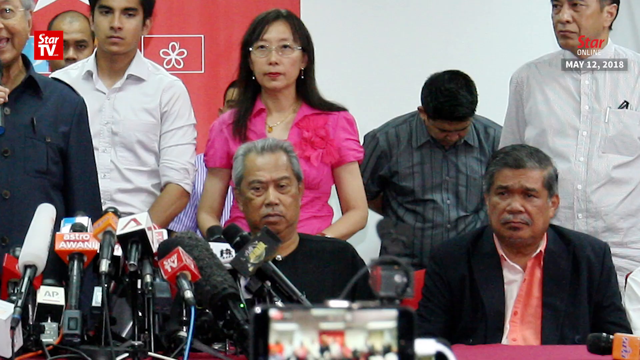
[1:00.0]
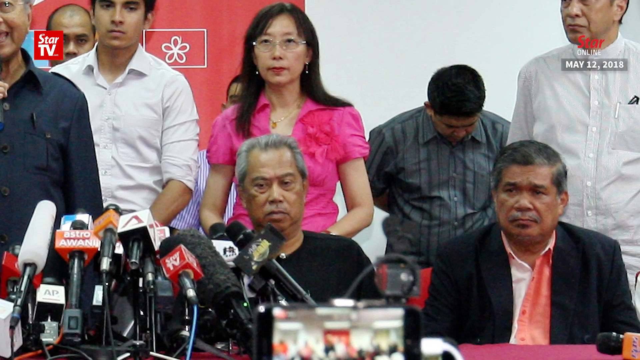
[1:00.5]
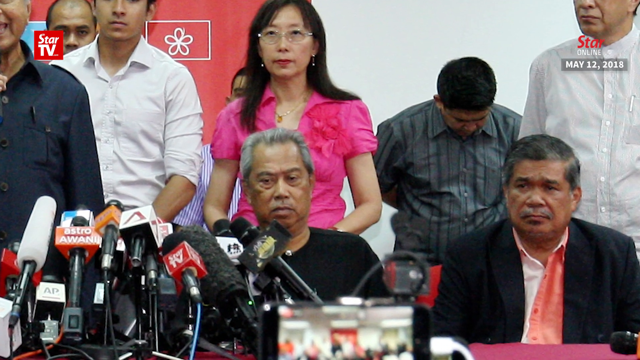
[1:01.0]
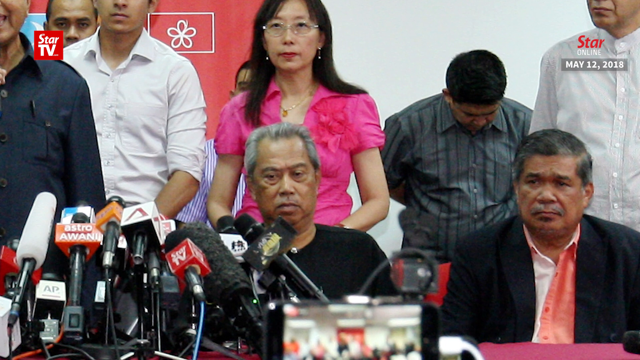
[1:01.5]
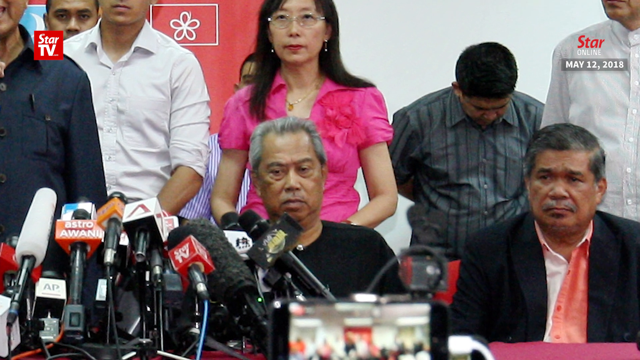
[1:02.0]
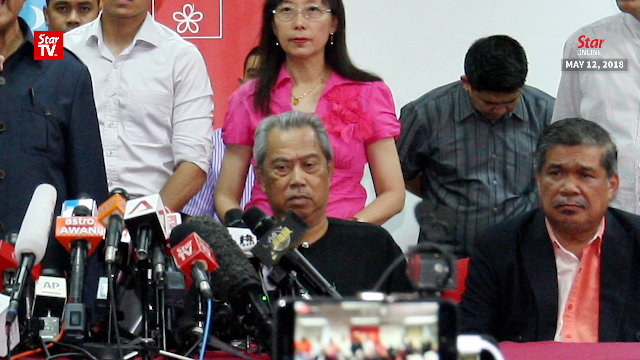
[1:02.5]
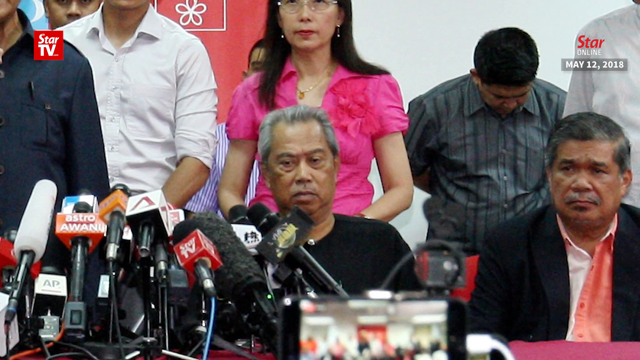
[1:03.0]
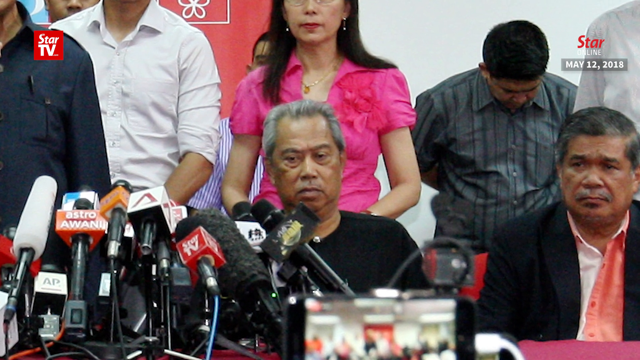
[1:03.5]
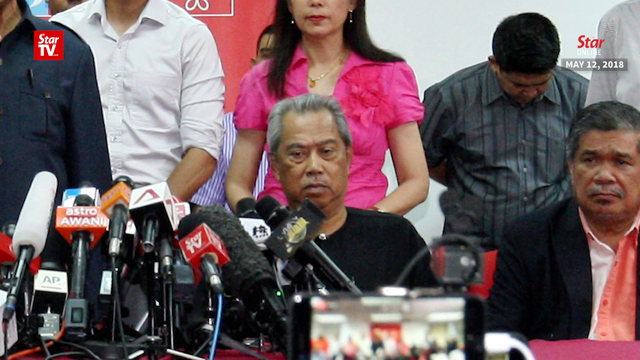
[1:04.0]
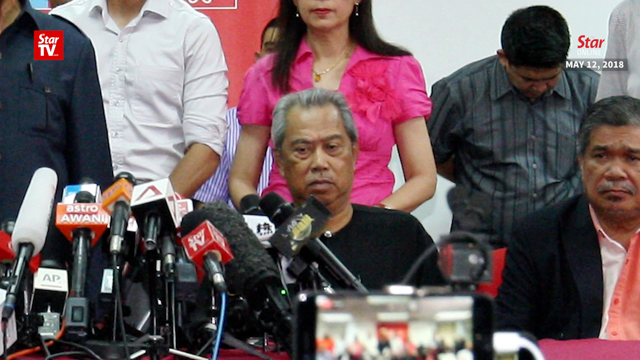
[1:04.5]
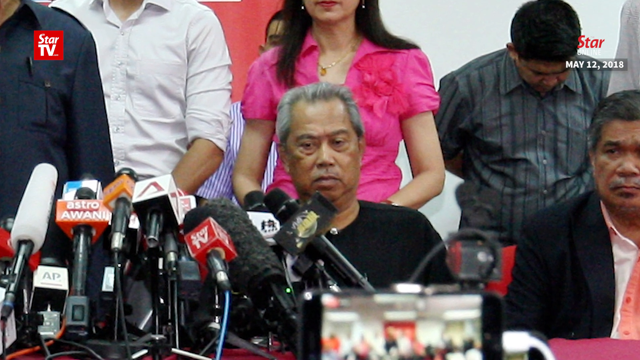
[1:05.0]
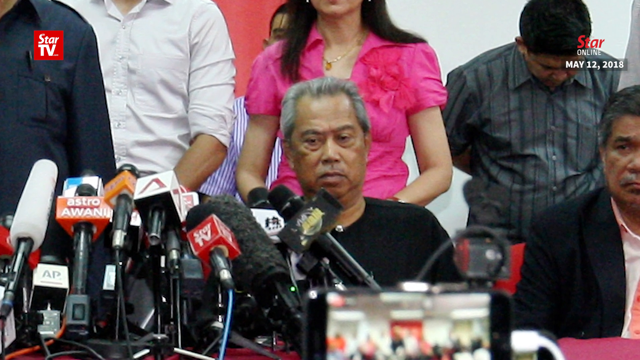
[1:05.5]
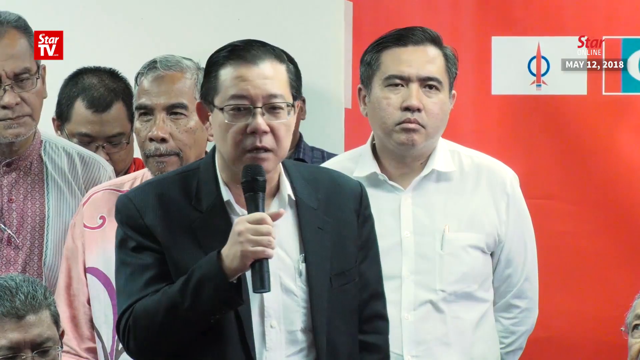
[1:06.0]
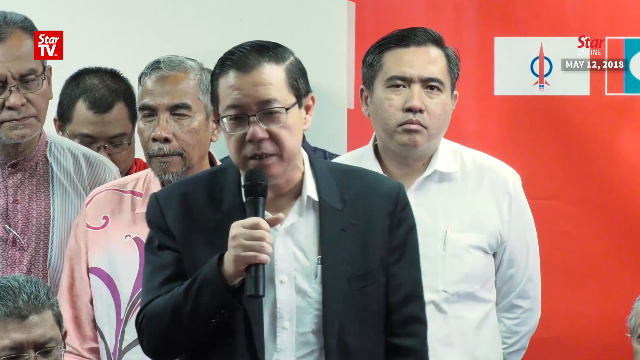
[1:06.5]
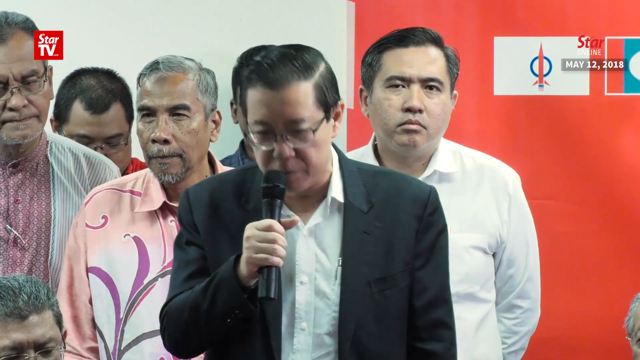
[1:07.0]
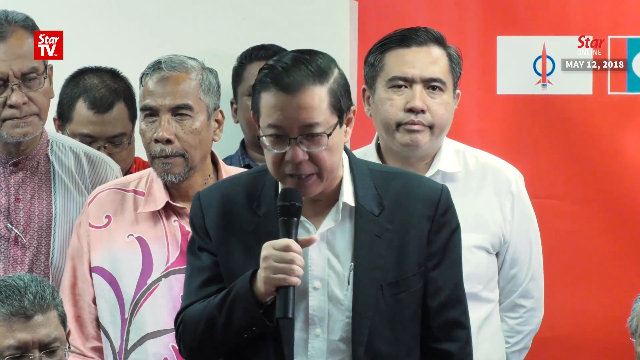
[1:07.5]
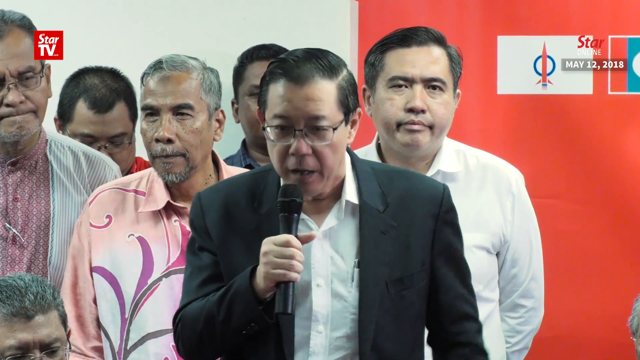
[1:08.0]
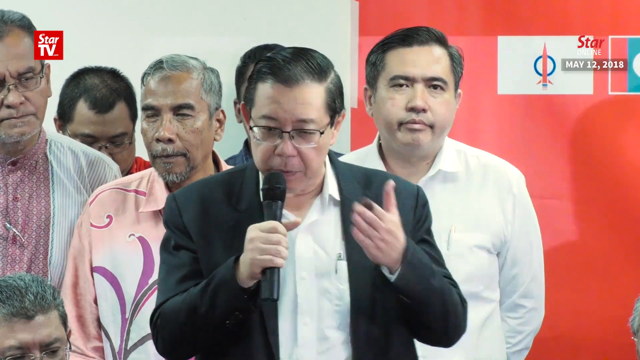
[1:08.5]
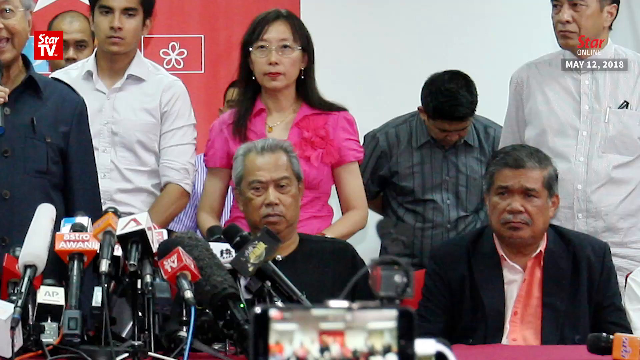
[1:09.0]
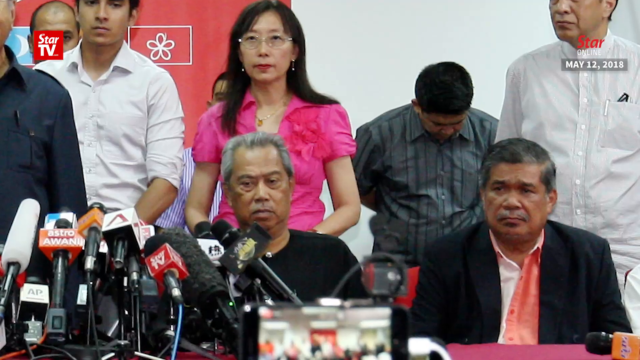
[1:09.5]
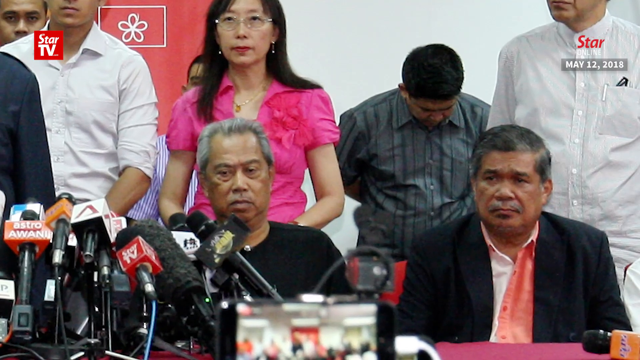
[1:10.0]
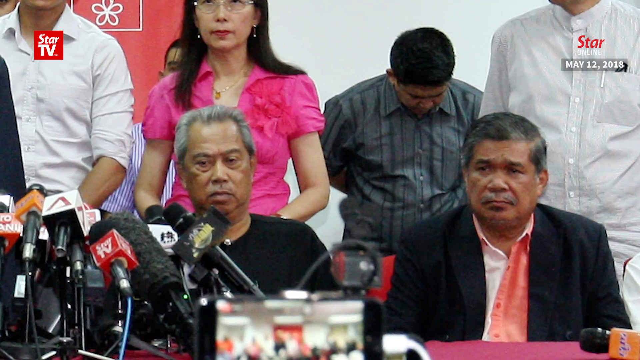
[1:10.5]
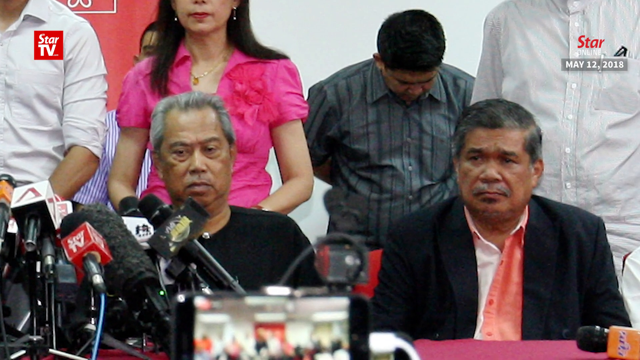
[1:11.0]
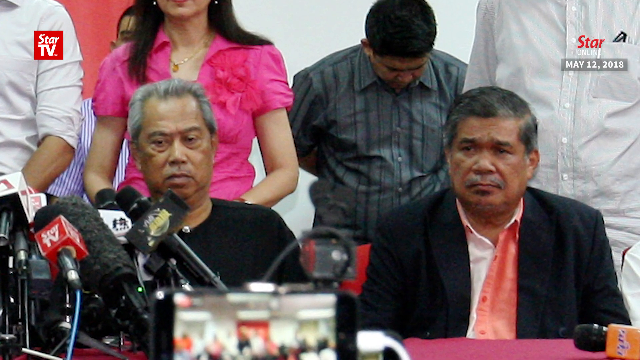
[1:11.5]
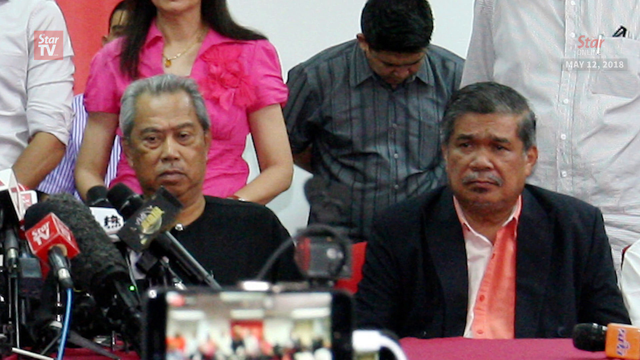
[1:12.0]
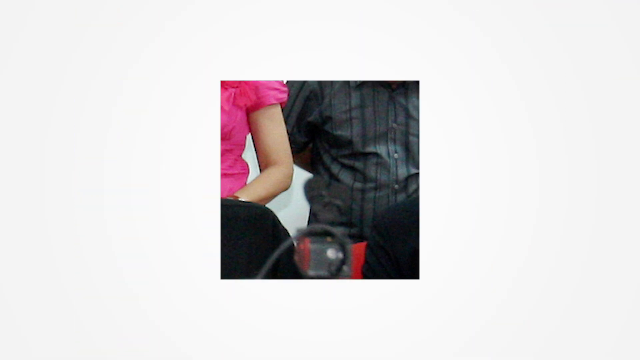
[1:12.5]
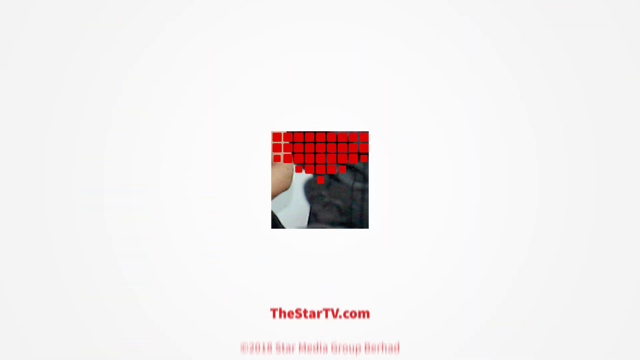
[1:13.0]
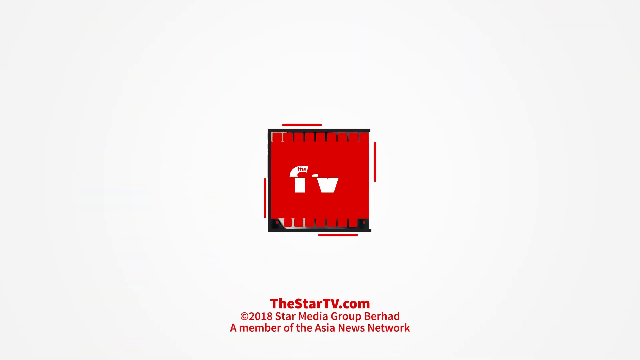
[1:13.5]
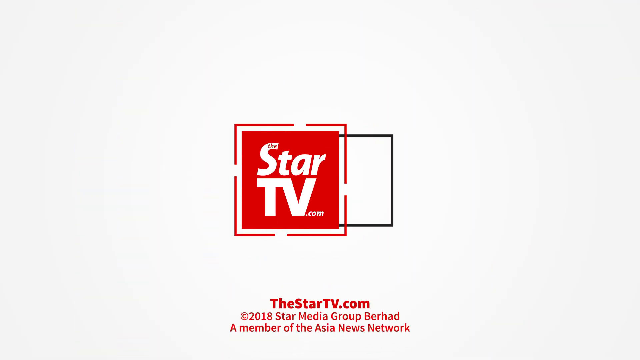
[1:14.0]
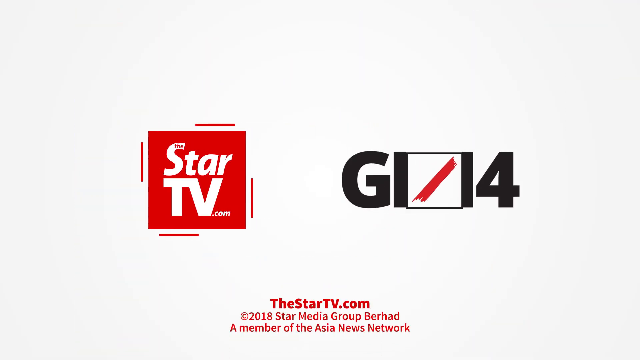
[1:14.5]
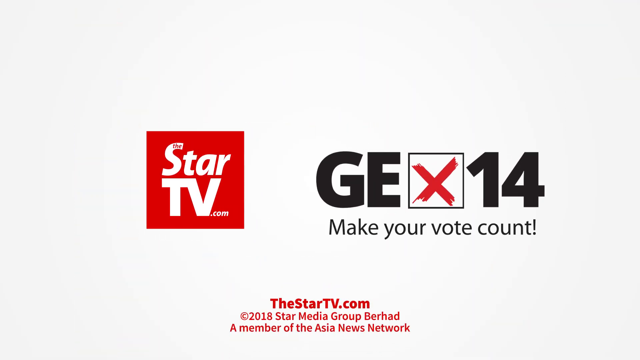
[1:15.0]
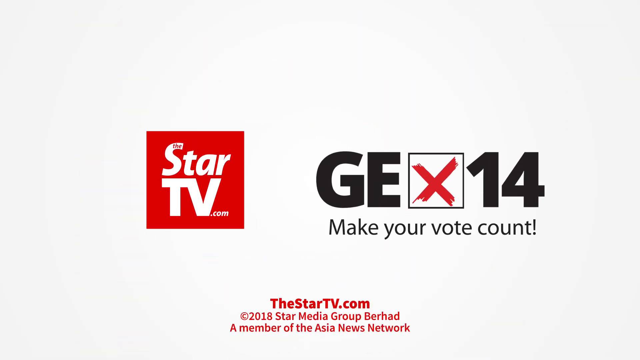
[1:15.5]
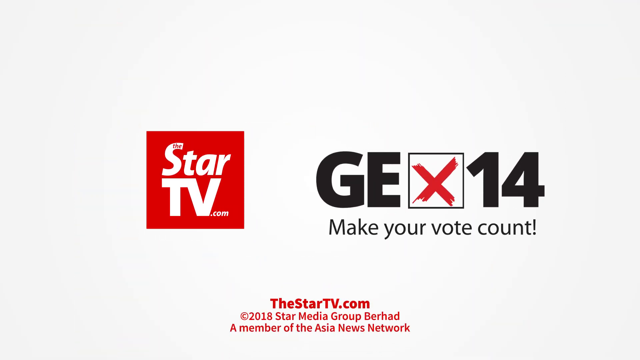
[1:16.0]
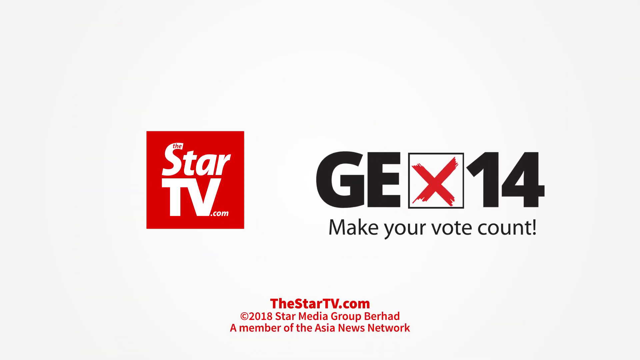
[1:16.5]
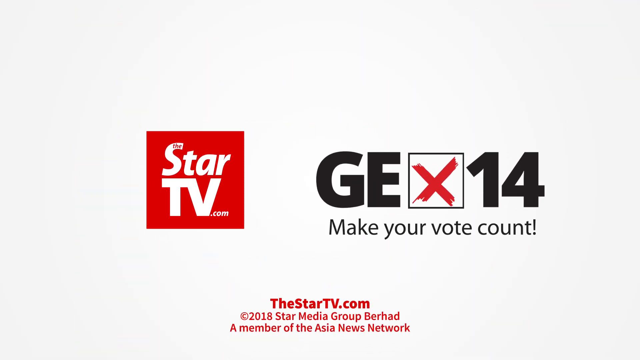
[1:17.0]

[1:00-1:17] The video, from the outlet Star TV, is titled Quit Griping About Cabinet Posts and appears to be a candidate profile for a general election, apparently in 2014. A graphic appears in the center of the screen with bold capital black letters on the right reading "GE", a box with a red X in its center, and the number "14" to the right of the box. A woman in a light pink hijab gives an interview to reporters, with telephones and microphones held out around her face. As the camera pans out, a crowd of people is visible behind her. The footage alternates between the woman speaking with reporters, walking around the town, and having dinner with the townspeople.